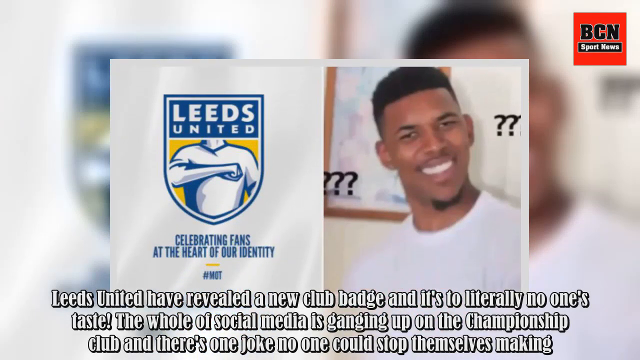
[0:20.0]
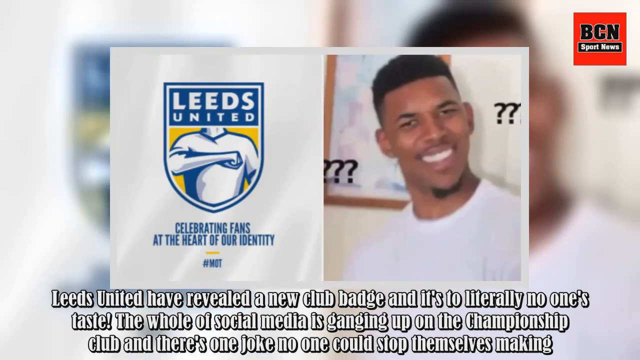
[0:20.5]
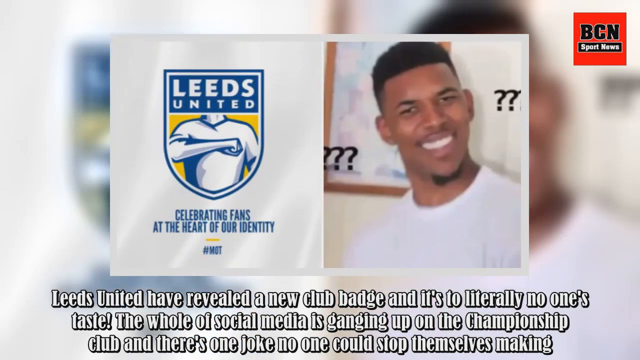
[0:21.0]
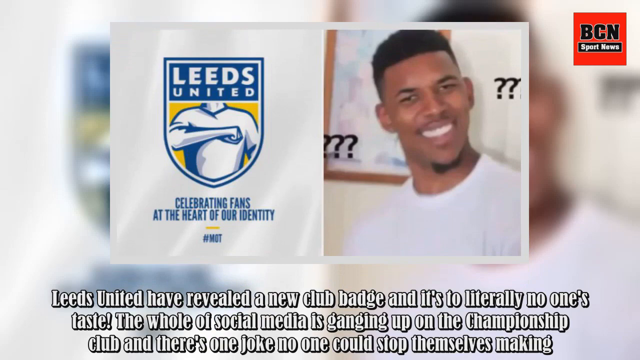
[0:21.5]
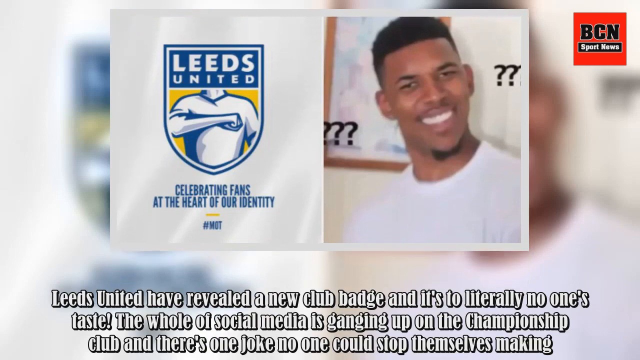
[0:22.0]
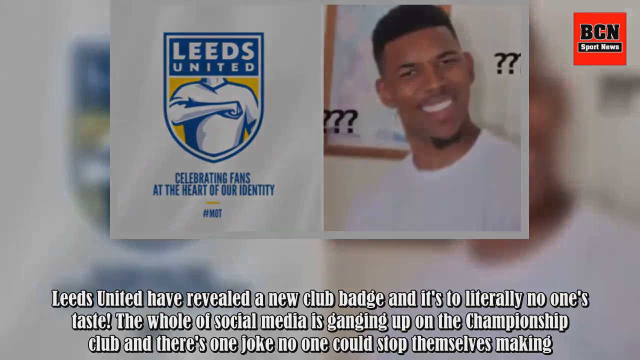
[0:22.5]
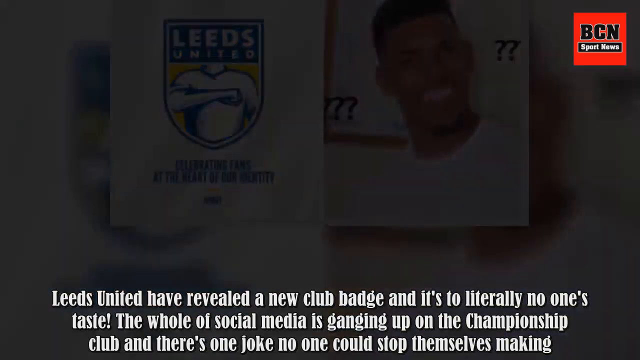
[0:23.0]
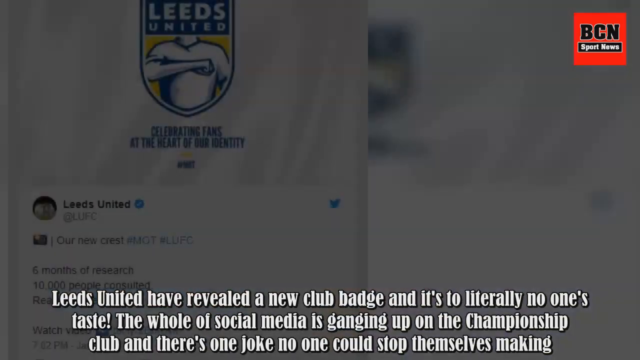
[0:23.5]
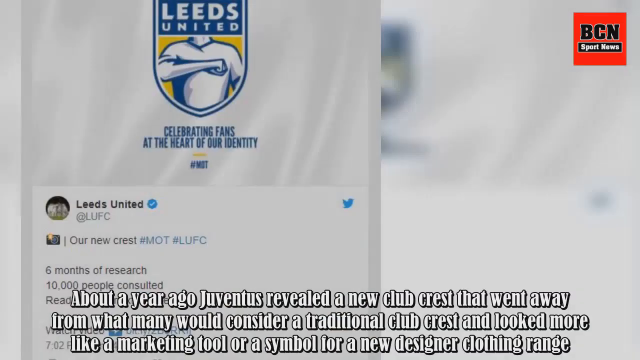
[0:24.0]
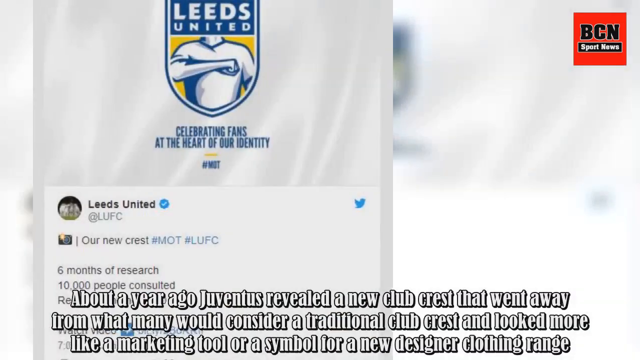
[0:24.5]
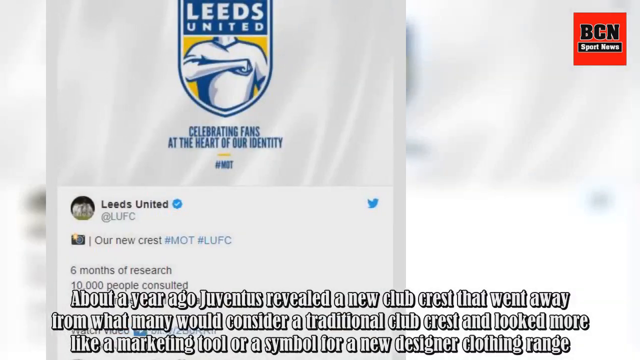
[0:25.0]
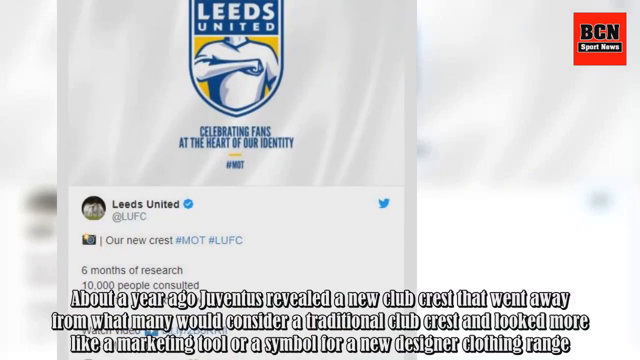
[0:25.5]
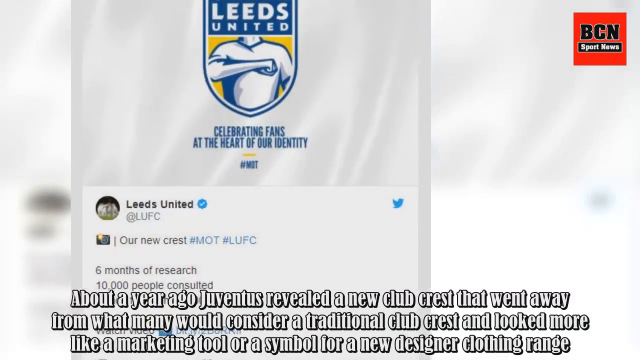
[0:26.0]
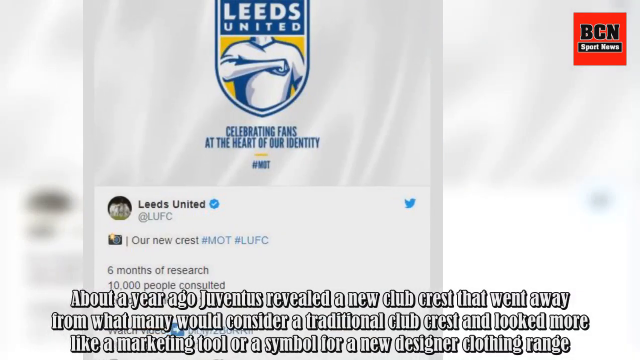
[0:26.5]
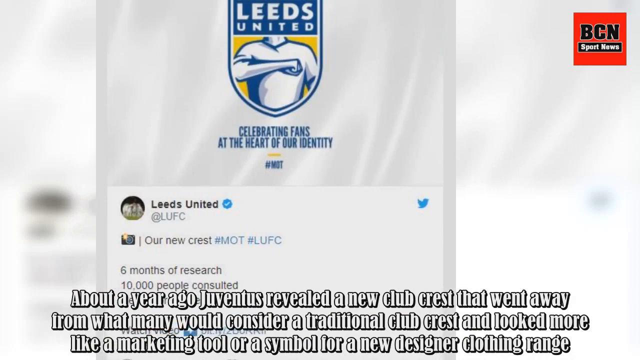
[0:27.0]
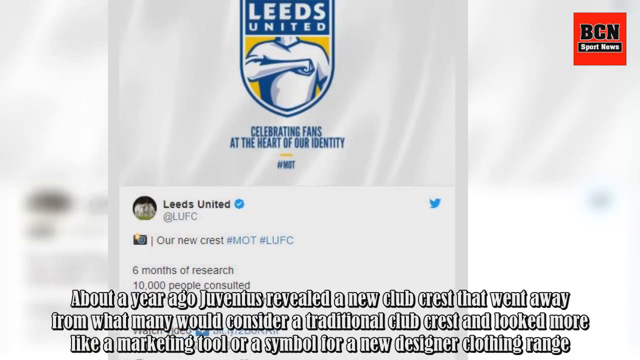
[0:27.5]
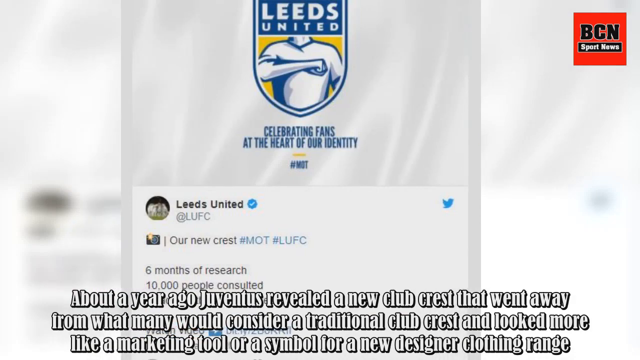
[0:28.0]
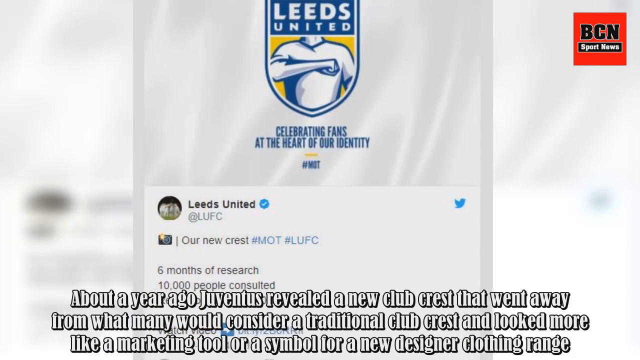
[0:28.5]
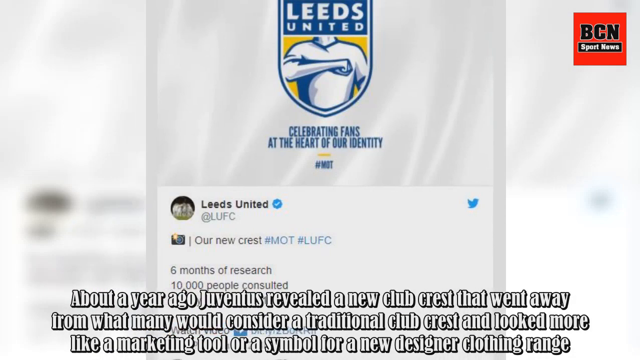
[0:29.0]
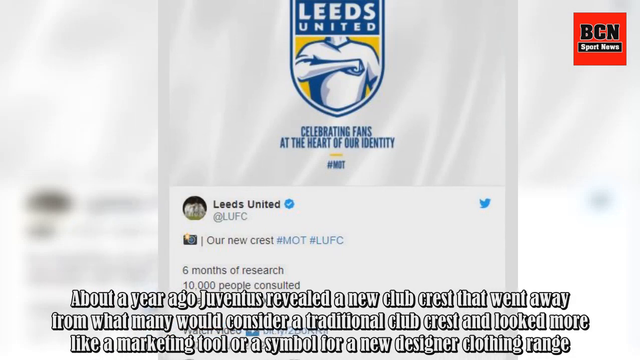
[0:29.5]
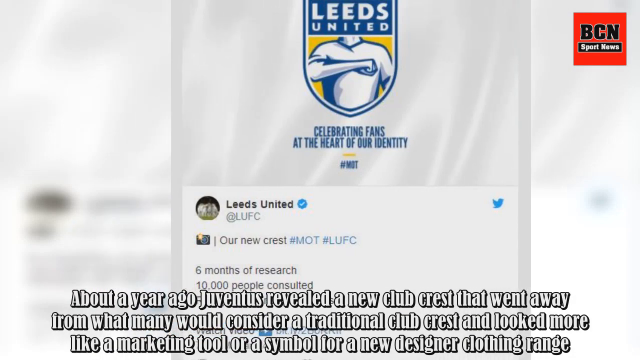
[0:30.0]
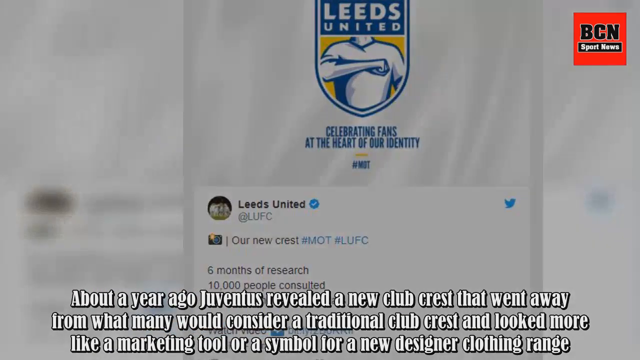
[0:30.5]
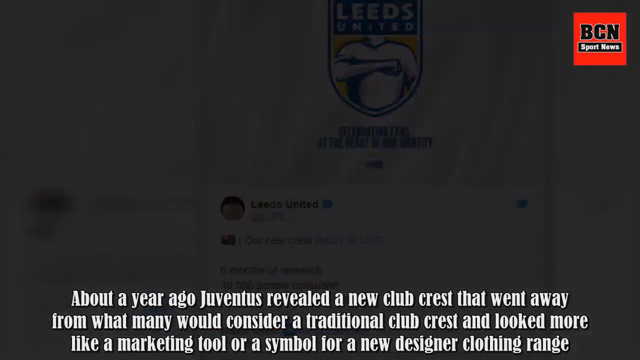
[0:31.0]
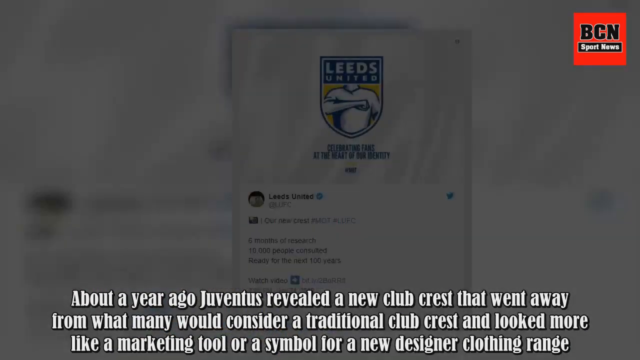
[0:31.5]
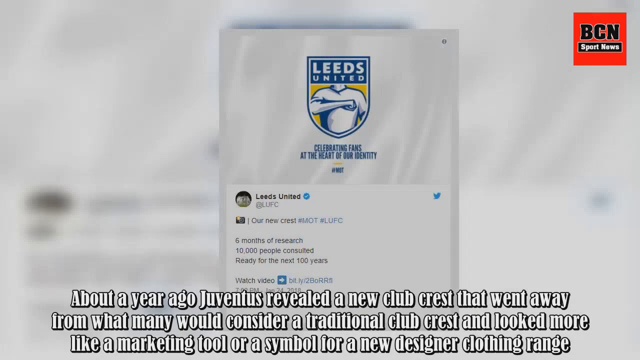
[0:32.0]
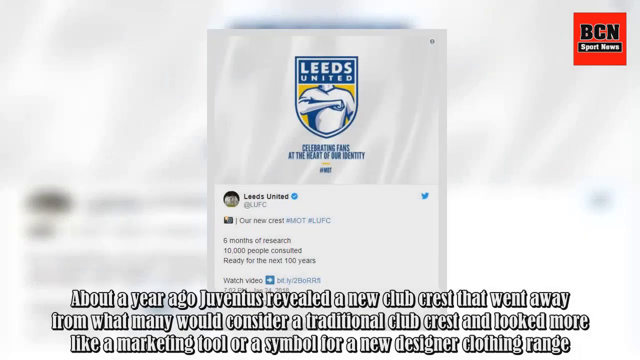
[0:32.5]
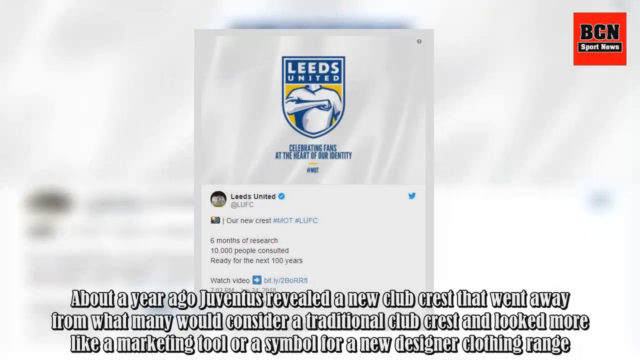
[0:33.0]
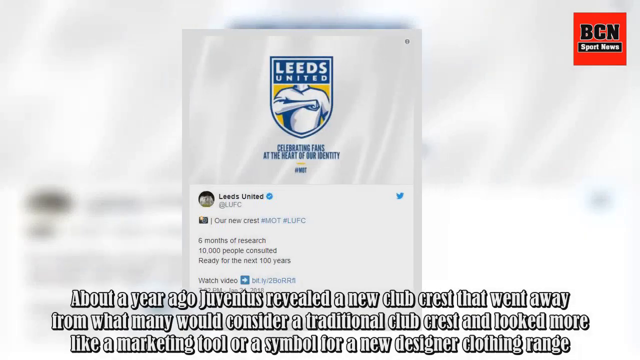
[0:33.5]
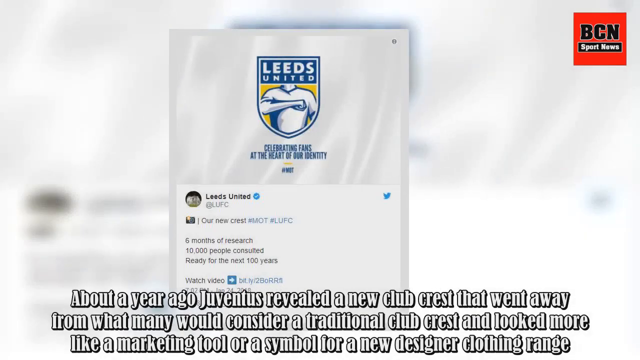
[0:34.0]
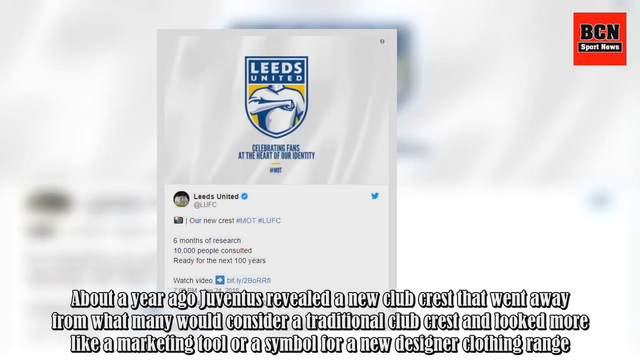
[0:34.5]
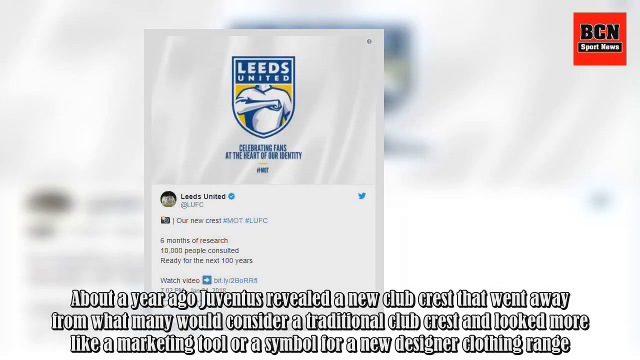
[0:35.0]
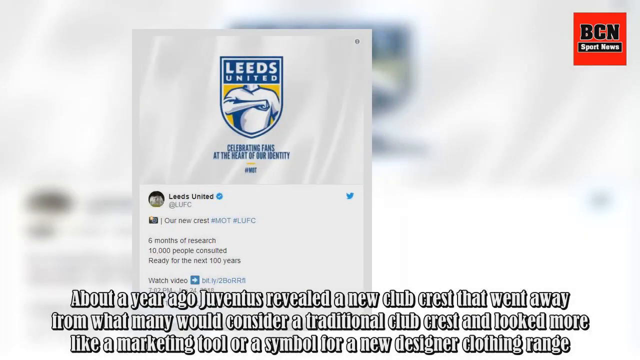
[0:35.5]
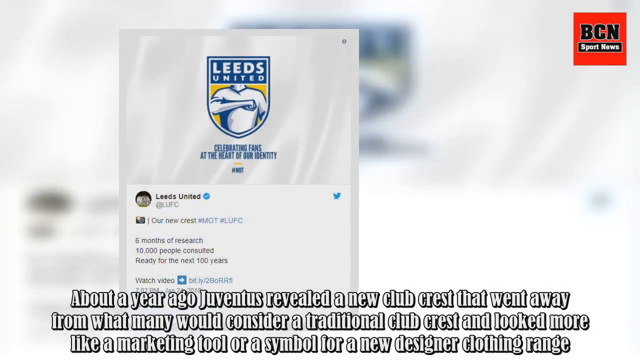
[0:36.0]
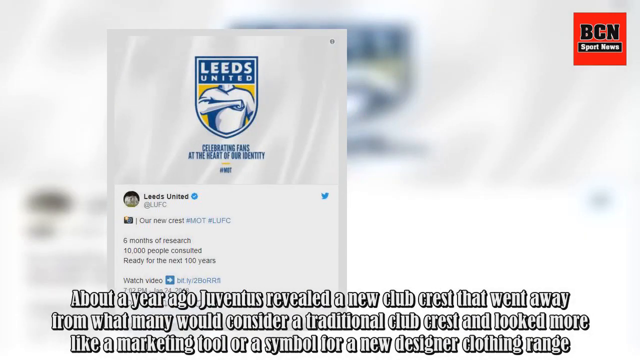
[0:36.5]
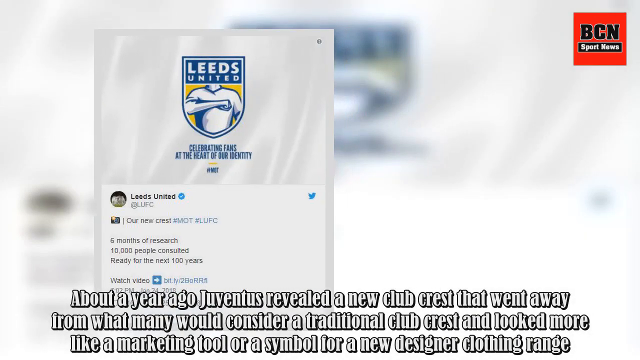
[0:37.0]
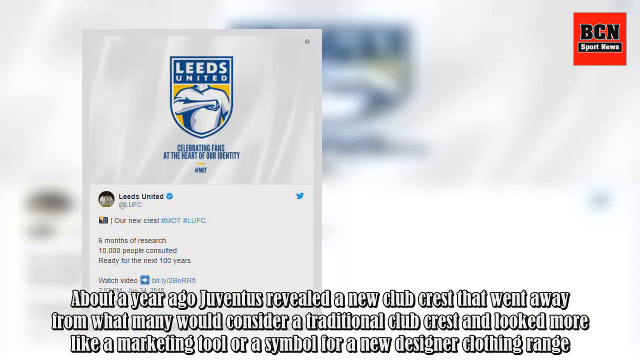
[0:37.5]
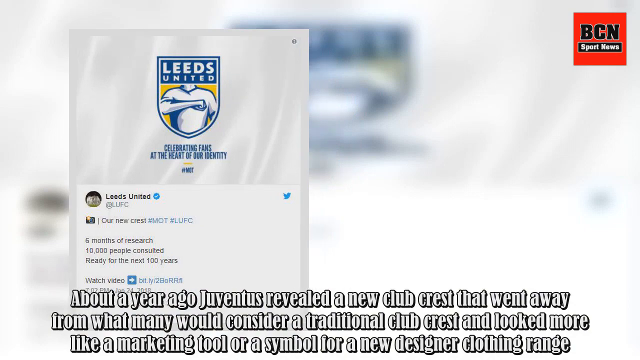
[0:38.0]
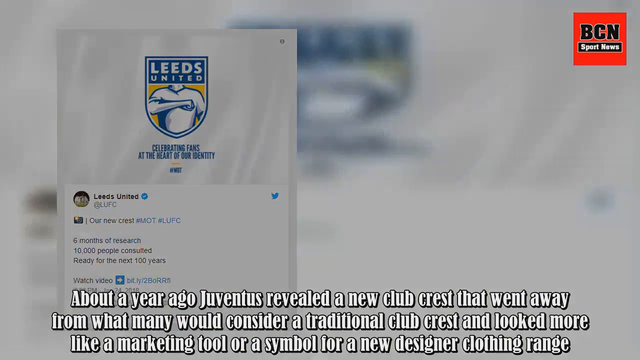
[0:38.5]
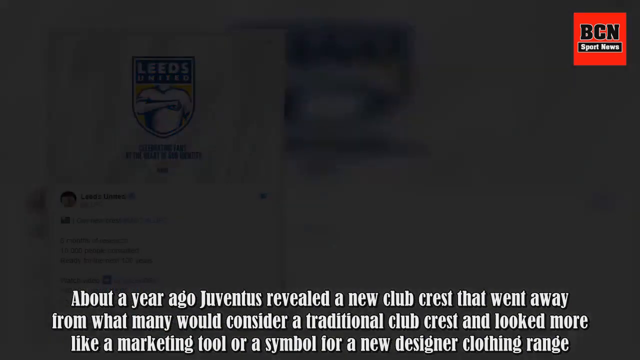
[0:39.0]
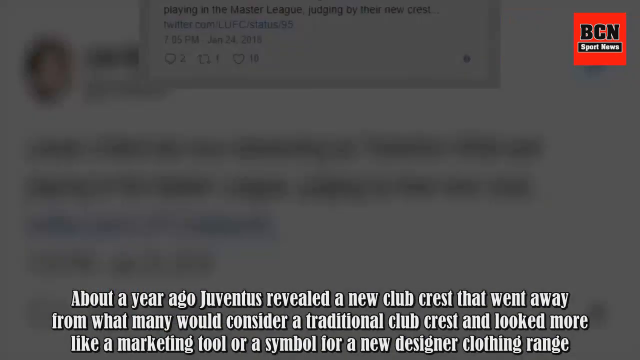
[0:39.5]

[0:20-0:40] An image shows a logo on the left and a person on the right. The person wears a white t-shirt and smiles, looking straight at the camera, with black question marks on the left and right sides of his face. The logo on the left reads "Leeds United" in white text on a blue background and shows the torso of a person with the right hand over the heart, against a yellow background behind the torso. Beneath it, blue text reads "celebrating fans at the heart of our identity". The image moves from the bottom of the screen to the top, and white text appears at the bottom of the screen. The video cuts to another image with the same Leeds United logo, apparently with a Twitter post underneath; the image and post move from the left side of the screen to the right. The post seems to be from Leeds United, with a blue check mark next to the name. The image seems to fade to black, reappears, and then moves from right to left, with more white text at the bottom of the screen.